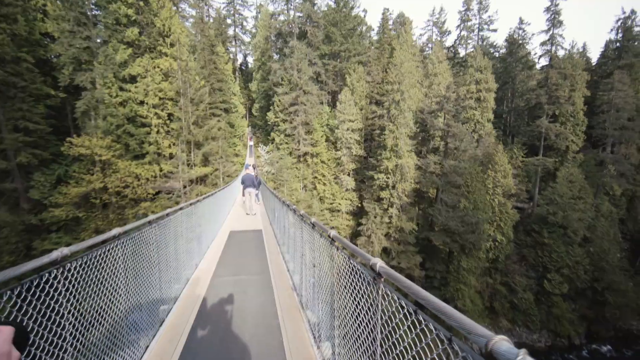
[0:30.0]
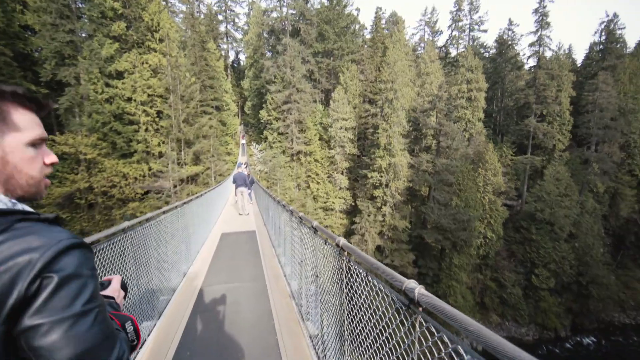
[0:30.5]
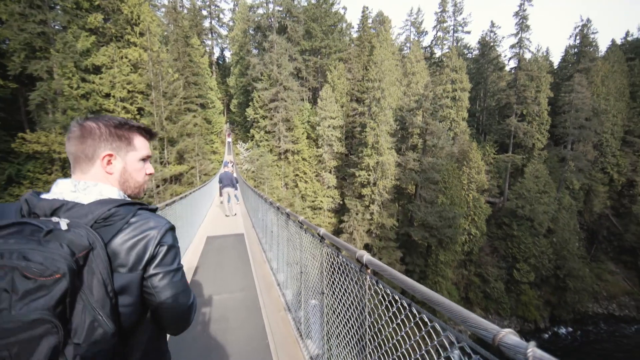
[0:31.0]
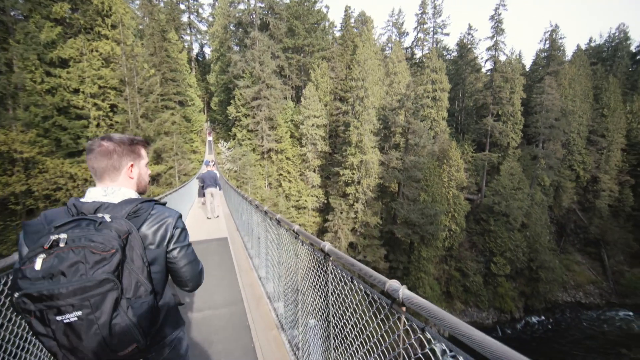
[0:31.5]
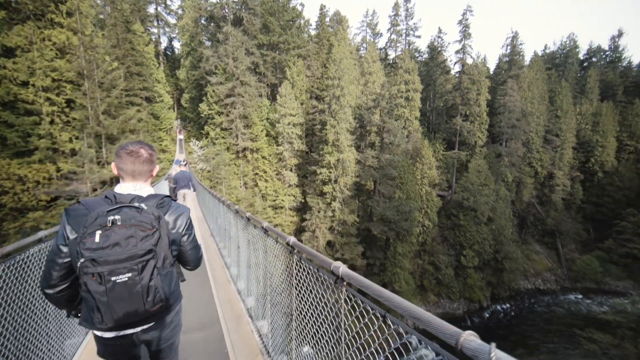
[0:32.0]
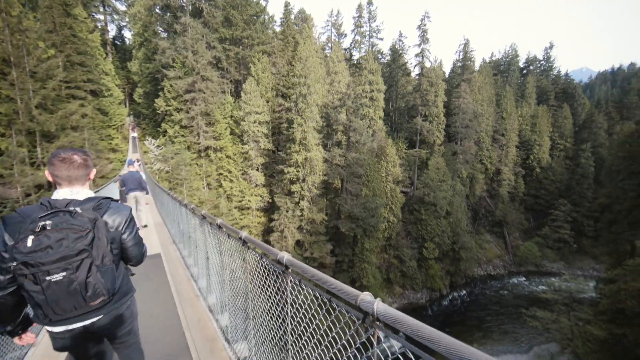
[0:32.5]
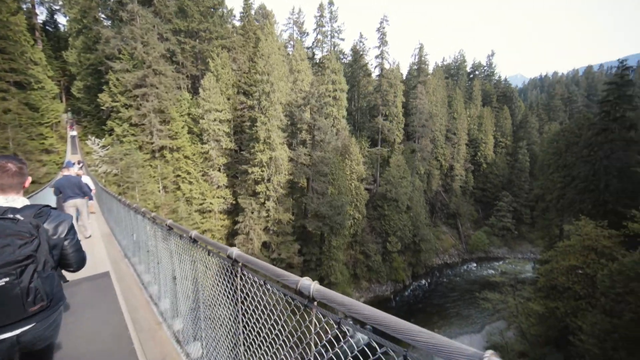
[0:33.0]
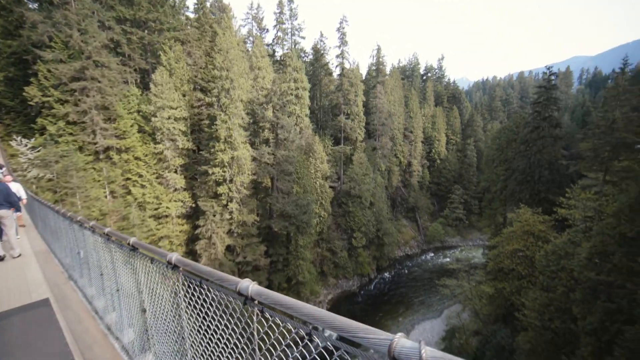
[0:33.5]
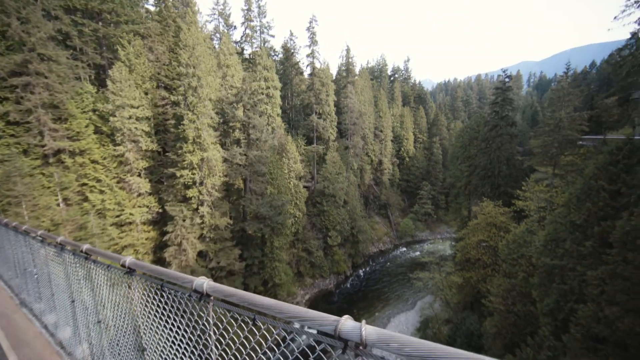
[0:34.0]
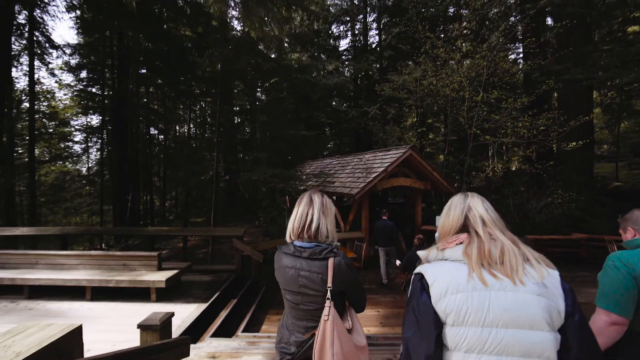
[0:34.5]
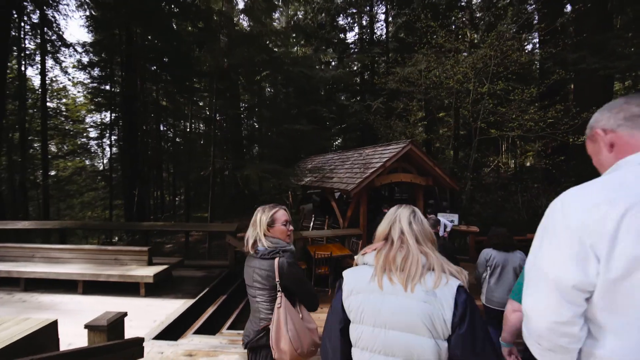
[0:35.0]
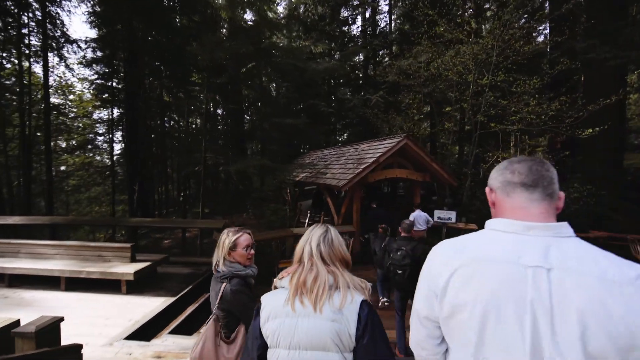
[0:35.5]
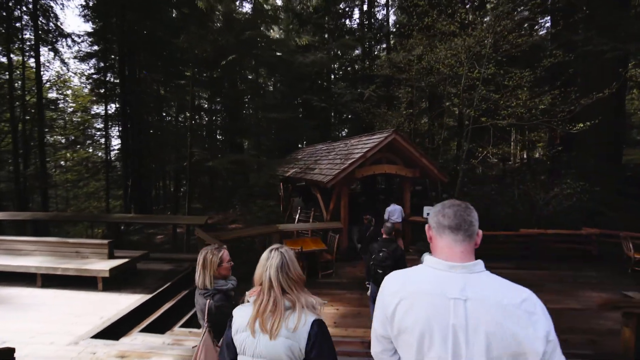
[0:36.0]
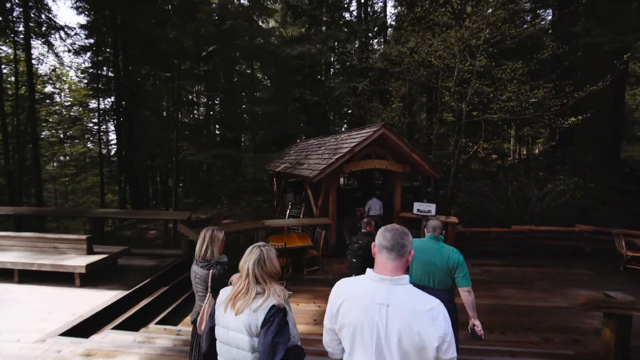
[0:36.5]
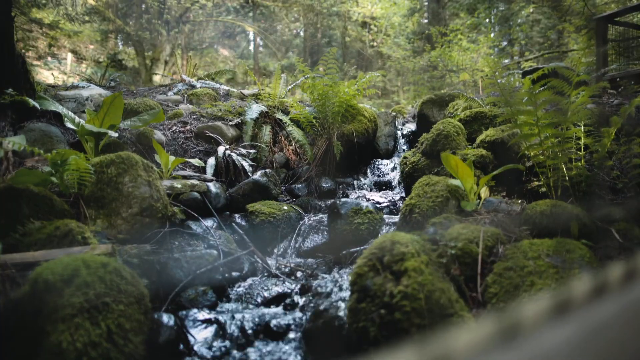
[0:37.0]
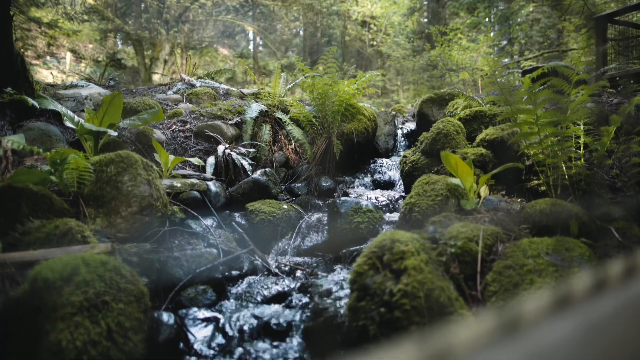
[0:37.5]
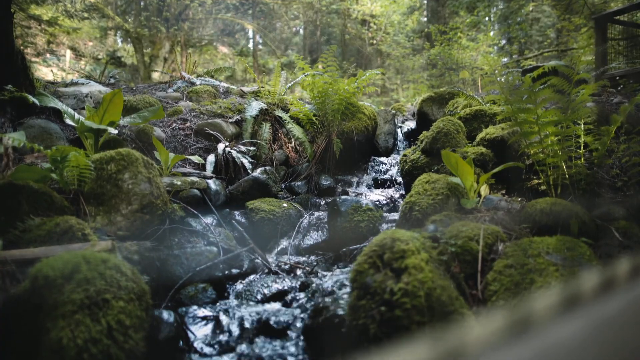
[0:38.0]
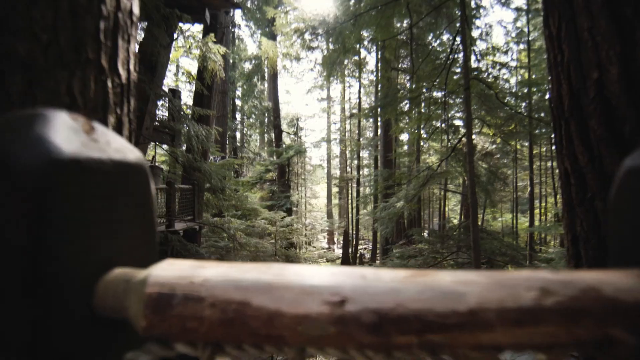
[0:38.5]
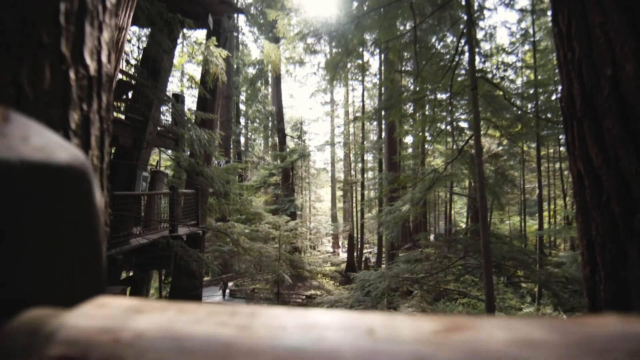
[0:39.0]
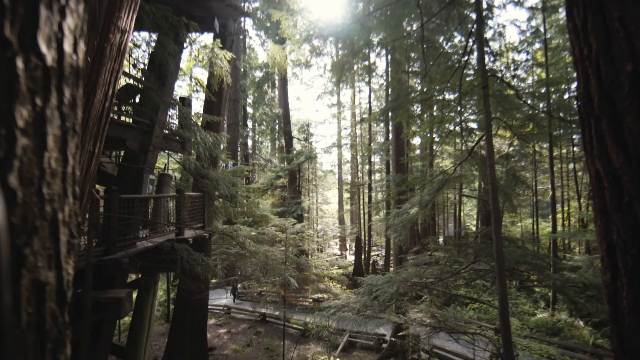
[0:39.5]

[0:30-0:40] Outdoors, very tall, skinny evergreen trees surround the camera. The camera is on a very narrow bridge, apparently a pedestrian walkway bridge, with a chain link fence on either side, and people walk single file down it. The camera starts to pan to the right, showing that the bridge spans a body of water that looks like a river, with a brief glimpse of white caps on the moving water, and evergreen trees continuing beyond. A different shot follows, still in a somewhat woodsy environment, where people are walking.